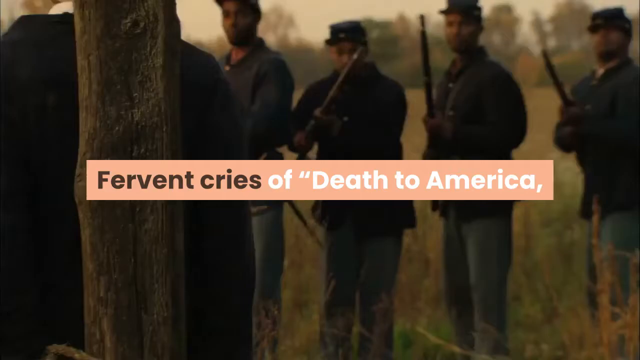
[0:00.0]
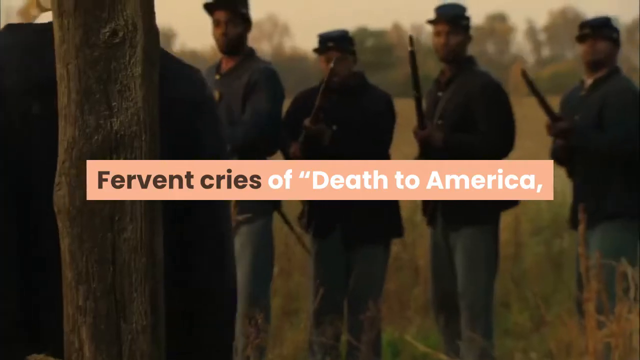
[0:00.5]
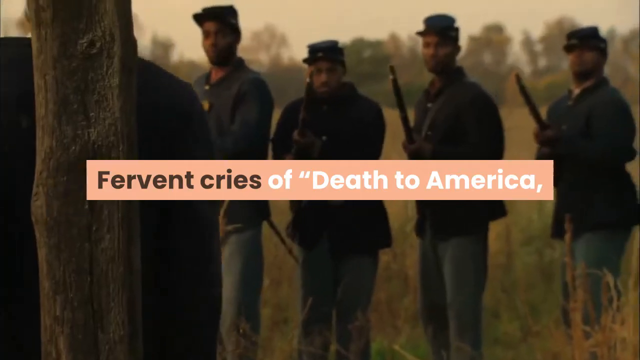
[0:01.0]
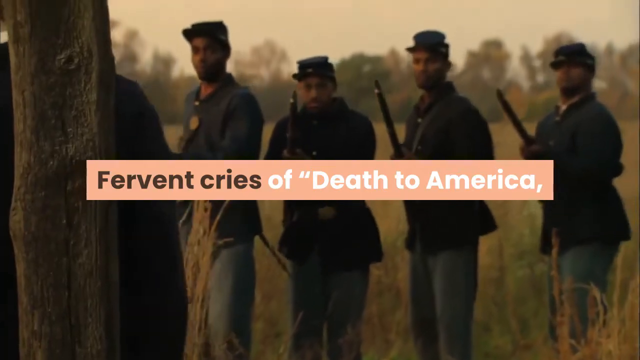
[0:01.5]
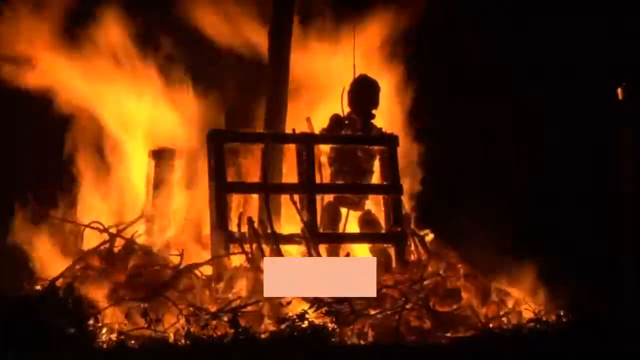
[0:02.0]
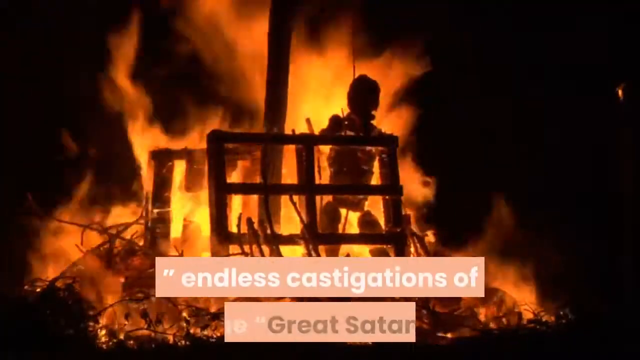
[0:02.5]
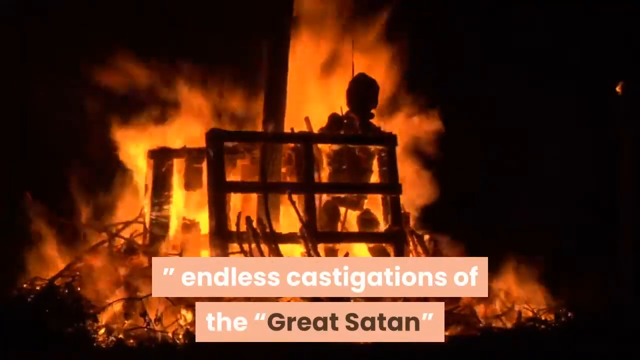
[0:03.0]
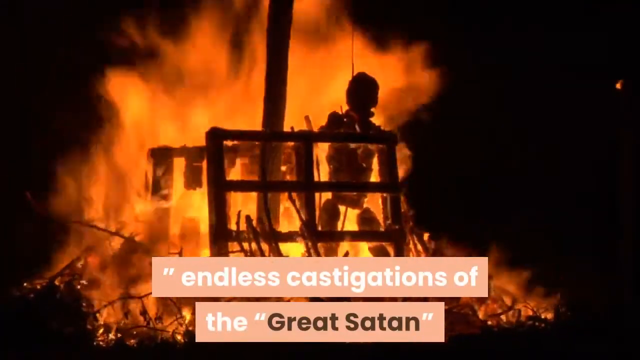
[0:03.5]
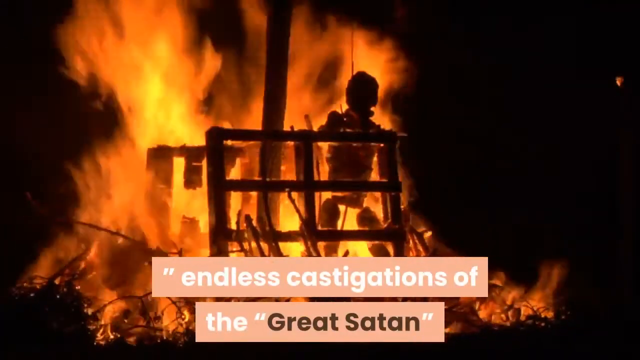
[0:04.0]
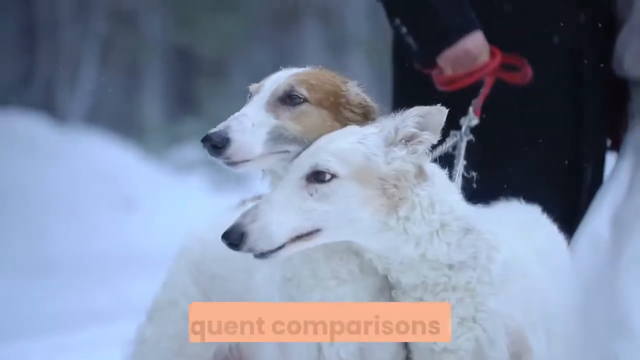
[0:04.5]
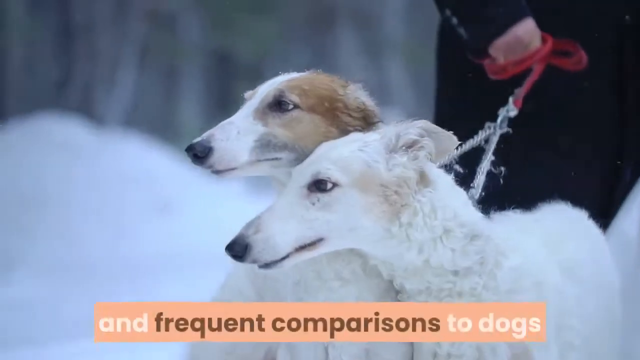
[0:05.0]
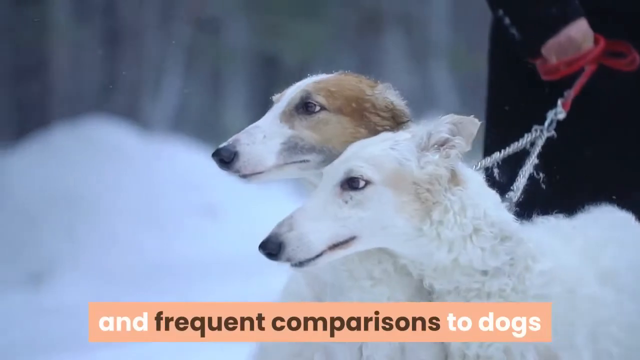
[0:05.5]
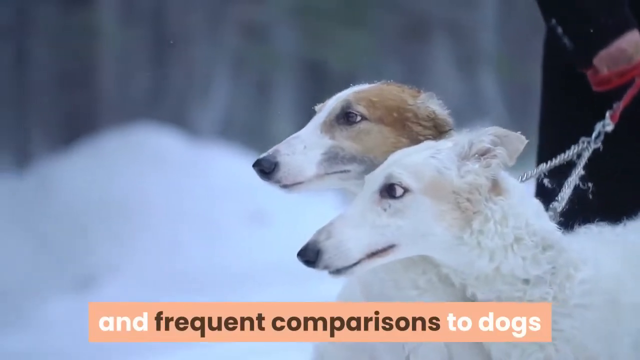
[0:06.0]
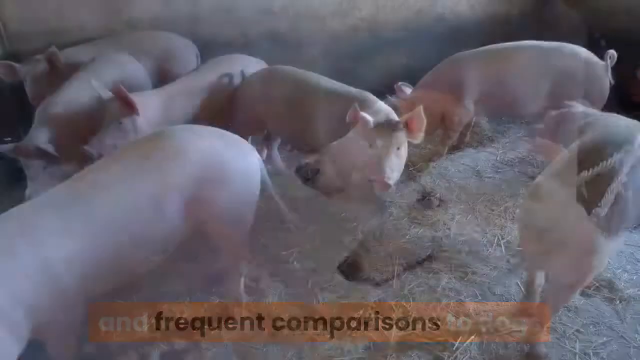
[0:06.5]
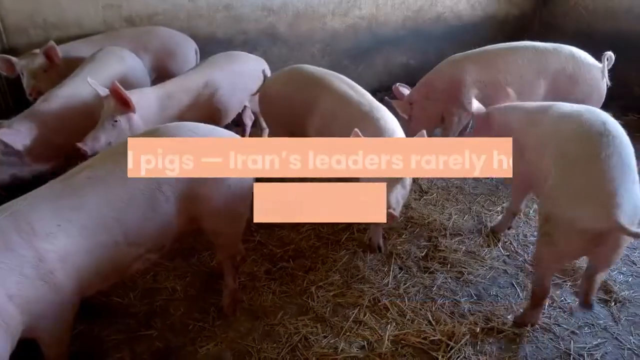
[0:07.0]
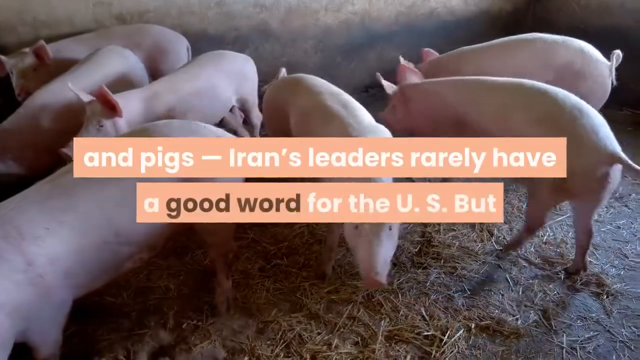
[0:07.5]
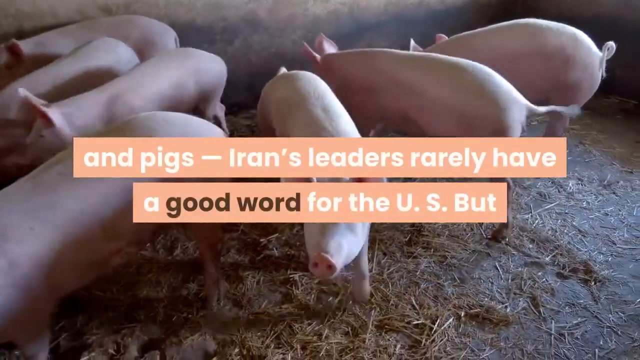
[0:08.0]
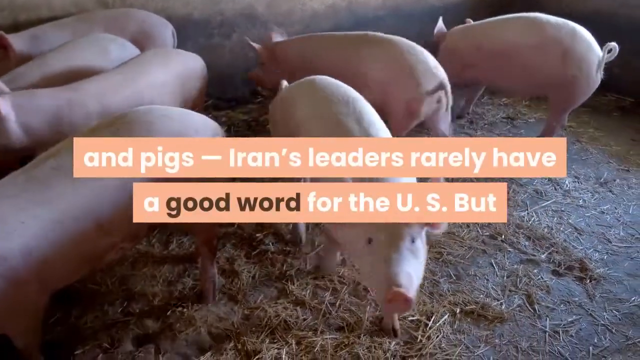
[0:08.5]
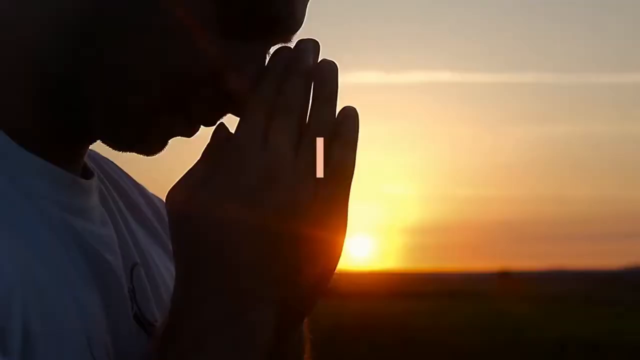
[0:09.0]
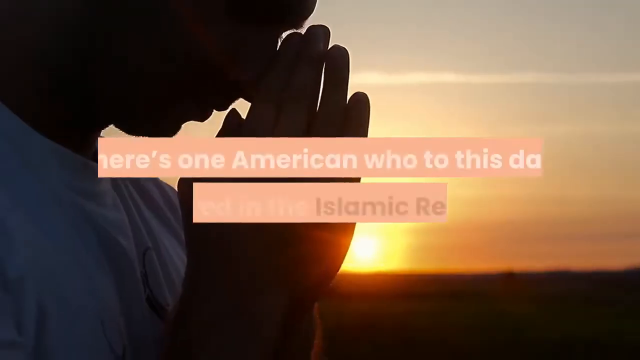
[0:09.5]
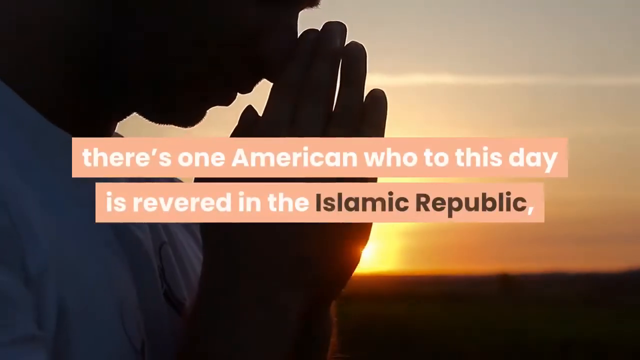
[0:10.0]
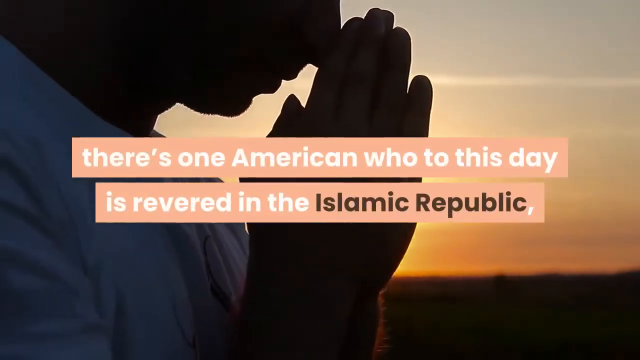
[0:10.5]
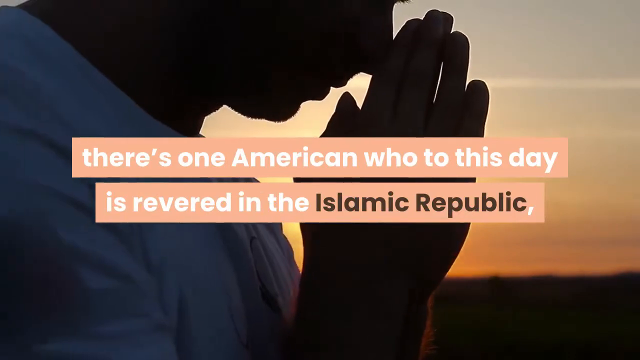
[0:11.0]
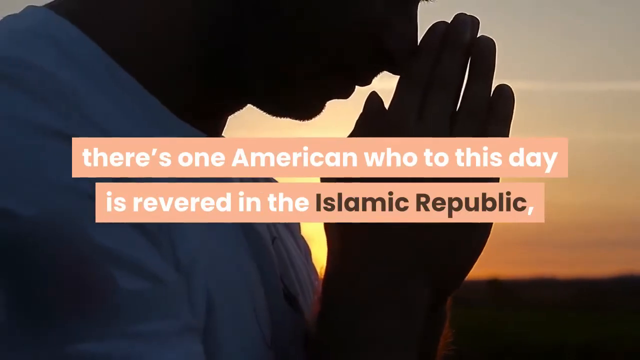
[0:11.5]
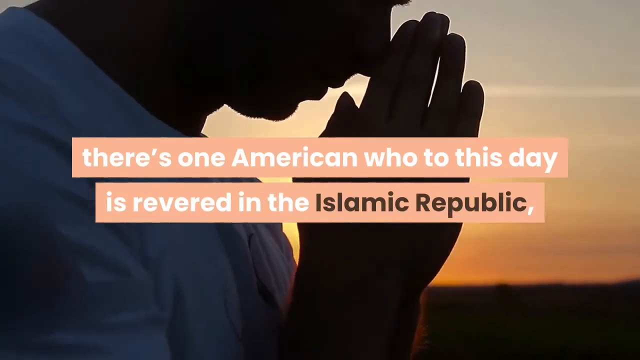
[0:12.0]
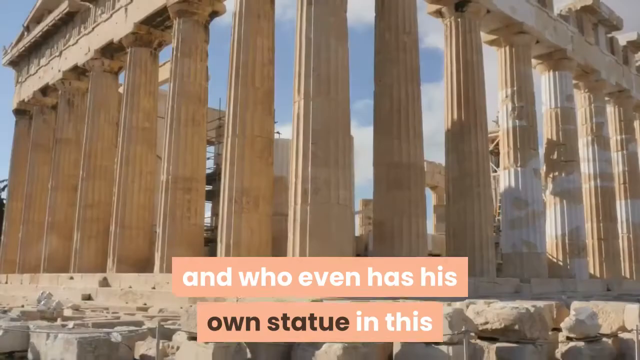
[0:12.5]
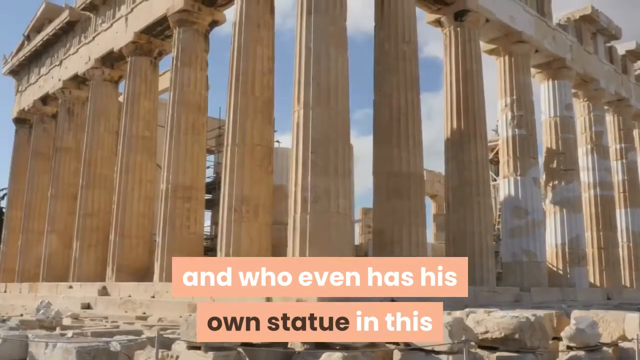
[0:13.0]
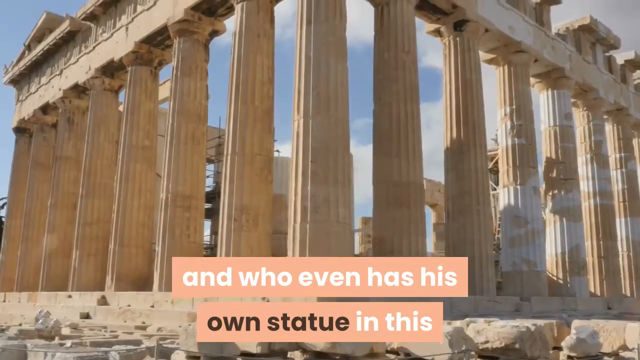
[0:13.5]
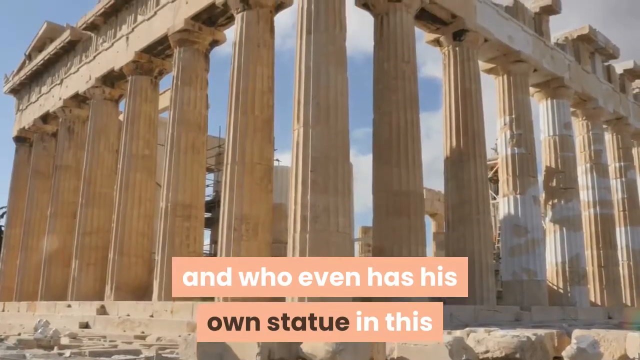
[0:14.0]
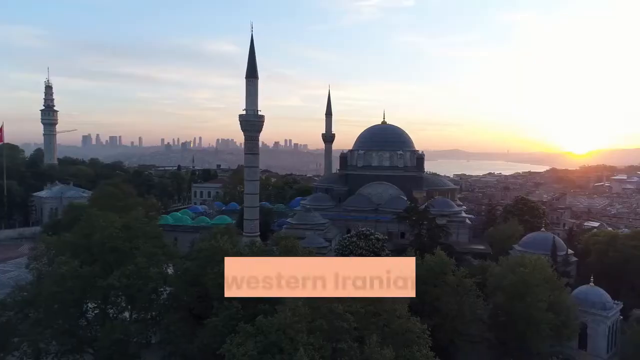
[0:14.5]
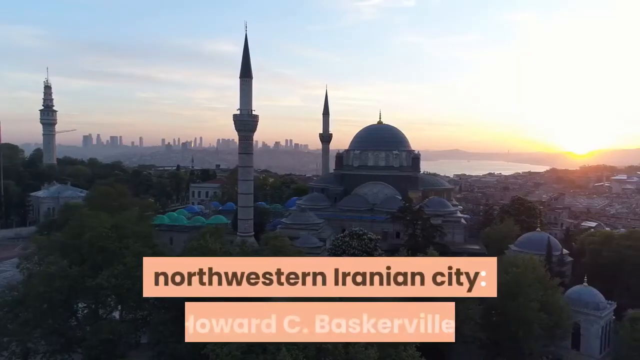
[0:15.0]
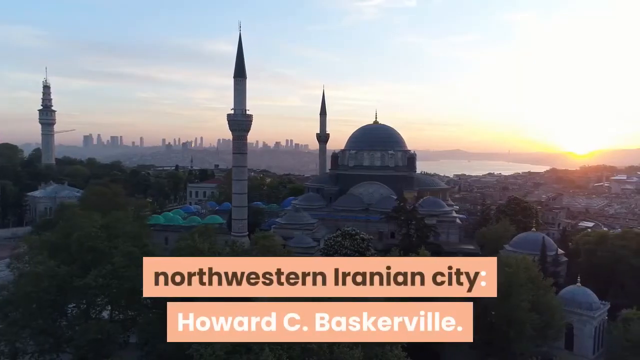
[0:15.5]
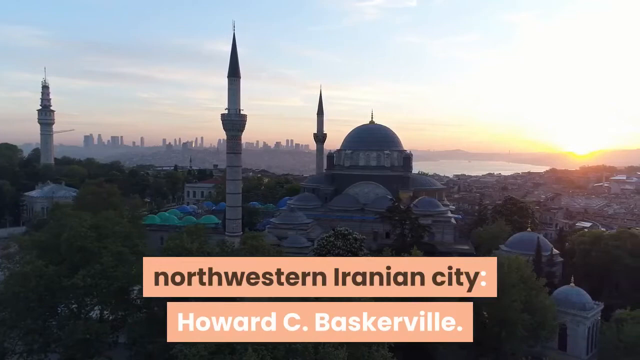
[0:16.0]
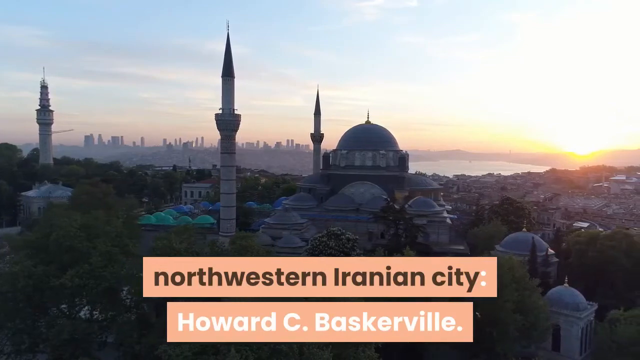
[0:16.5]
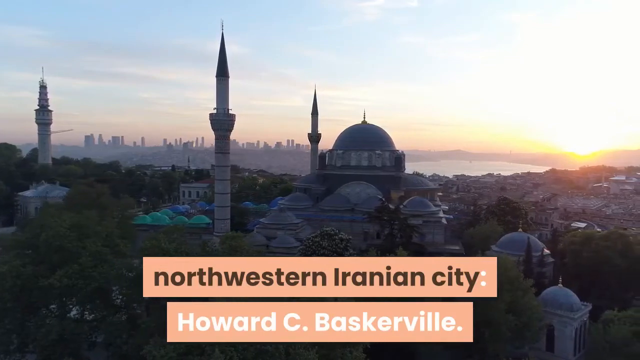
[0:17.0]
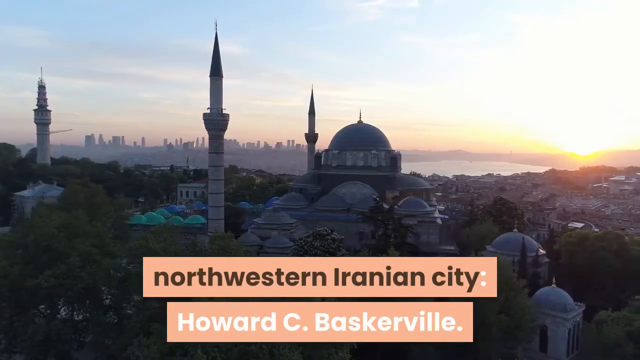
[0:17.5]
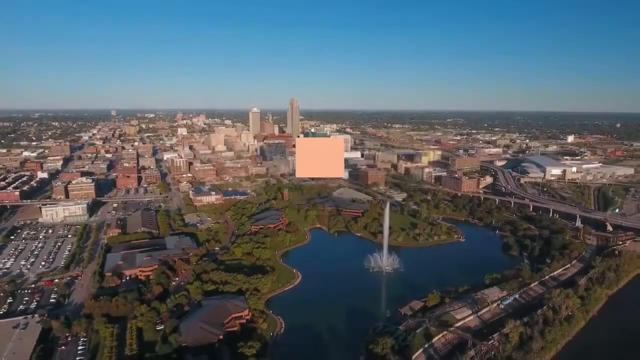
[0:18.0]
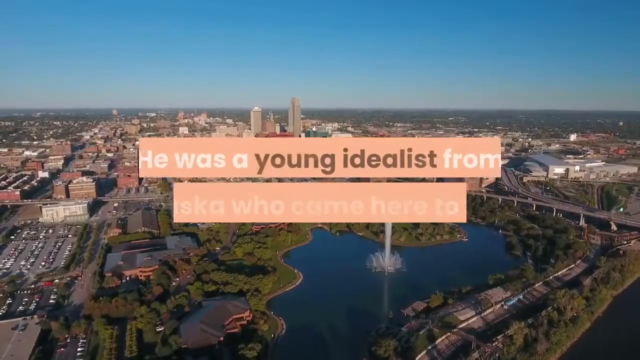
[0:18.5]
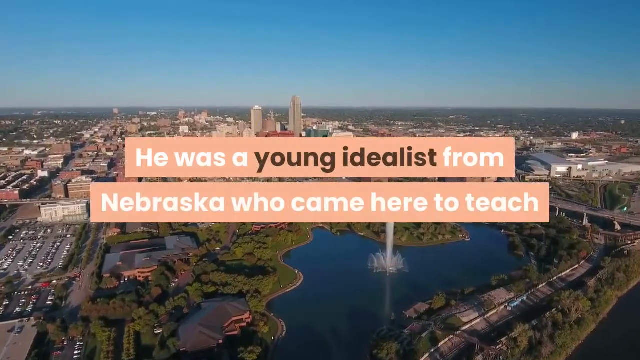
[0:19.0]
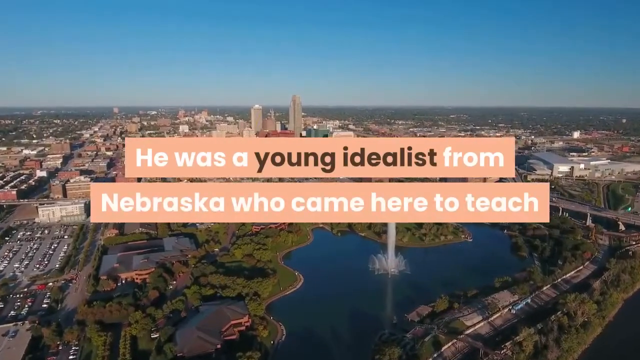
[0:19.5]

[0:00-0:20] The video moves through several short scenes from various places and times in history. It opens with four African American Civil War soldiers standing in a field facing a post, with a man standing in front of the post who looks like probably another soldier. The African American soldiers raise their guns. The scene changes to a large bonfire of burning wood and pallets, with a human-like figure in the midst of it, probably some kind of scarecrow or other item made to look like a human. The flames are large and bright. Next is a winter scene: a man in a long black coat holds a leash that splits in two and is attached to two dogs that look like Russian wolfhounds or something similar. Heavy snow covers the ground, and the blurred background is clearly a forest. Then seven very clean pigs are in a stall with straw on the ground. Next, a man prays; only his upper body is visible, his head is bowed slightly, and he is in the shadows. His hands are together close to his face so that his fingers touch his nose. He wears a white t-shirt, and the slightly blurred background is a colorful sunset with the sun sliding down over the horizon. The scene shifts to Greece, probably the Acropolis, showing a large columned building and old ruins. Then comes an aerial view of an Iranian city in northwestern Iran, with a sunset in the background, a body of water farthest from the viewer, and multiple domed buildings and towers. Next is an aerial view of an American city in Nebraska, with a lake with a fountain in its center in the foreground and, behind it, many short and tall buildings, bridges and parking lots. Throughout, words appear across each scene at the bottom on a pink background, describing Iranian leaders' dislike of Americans.